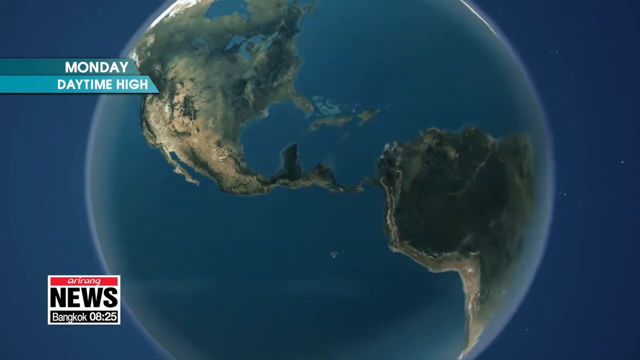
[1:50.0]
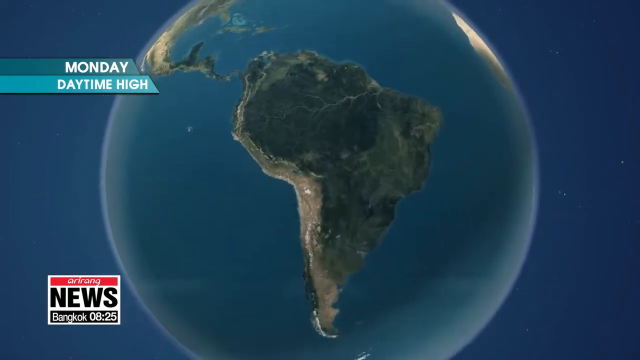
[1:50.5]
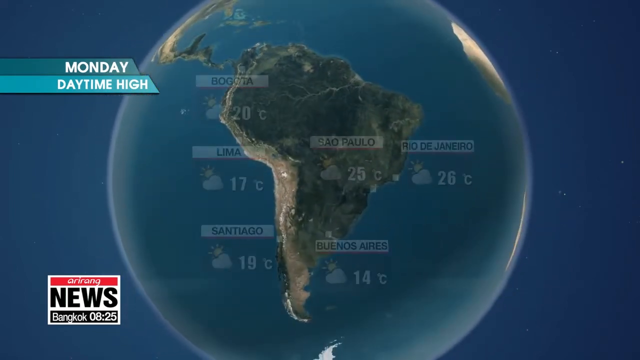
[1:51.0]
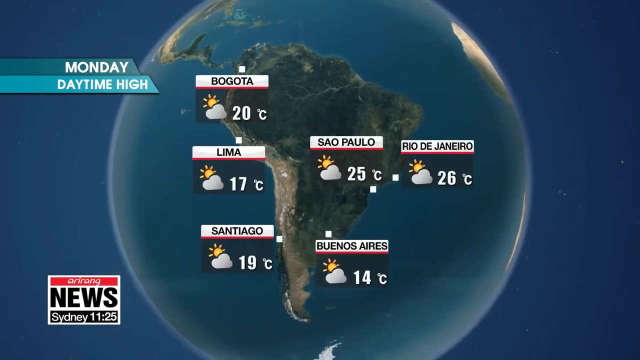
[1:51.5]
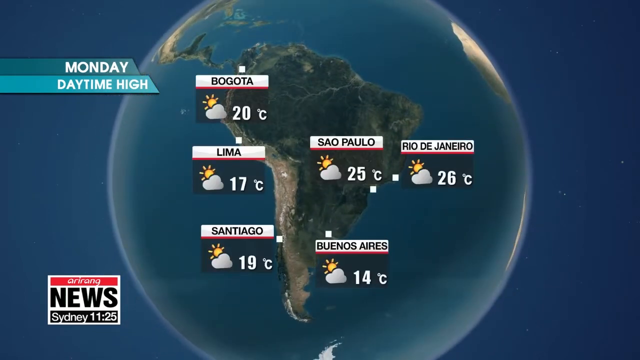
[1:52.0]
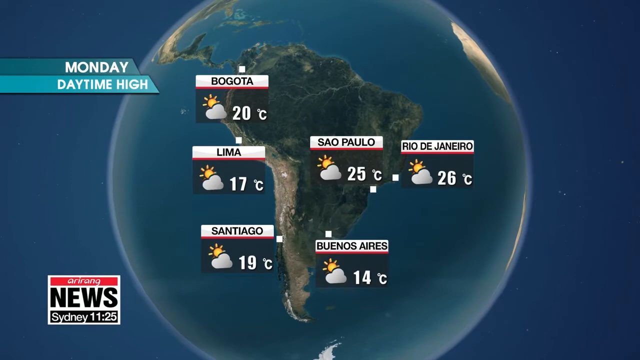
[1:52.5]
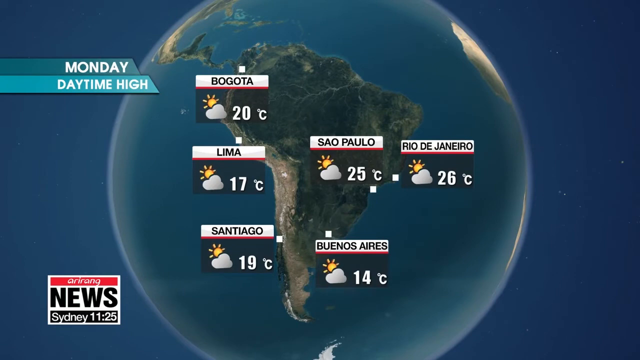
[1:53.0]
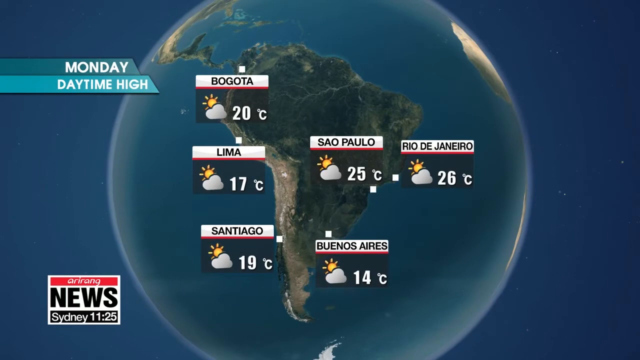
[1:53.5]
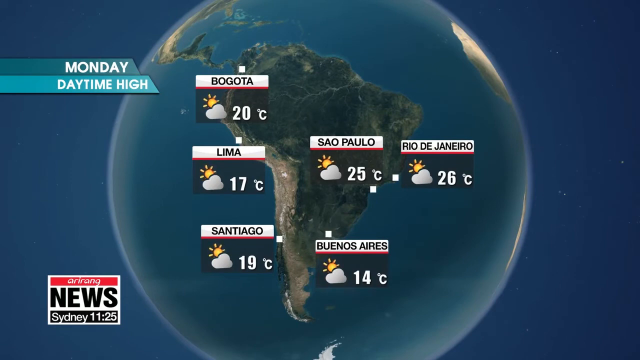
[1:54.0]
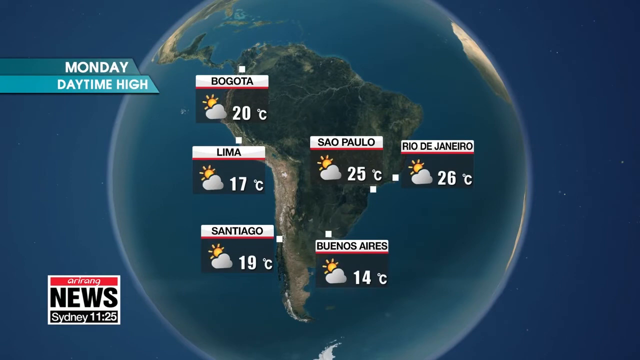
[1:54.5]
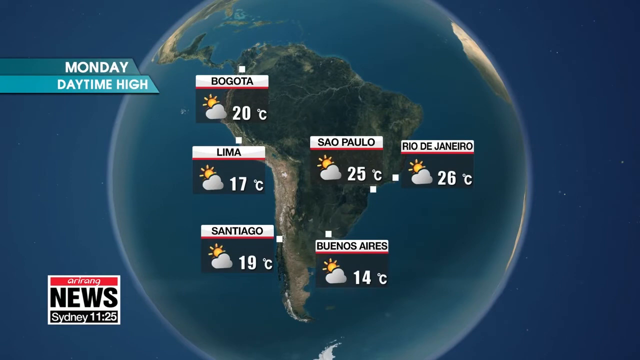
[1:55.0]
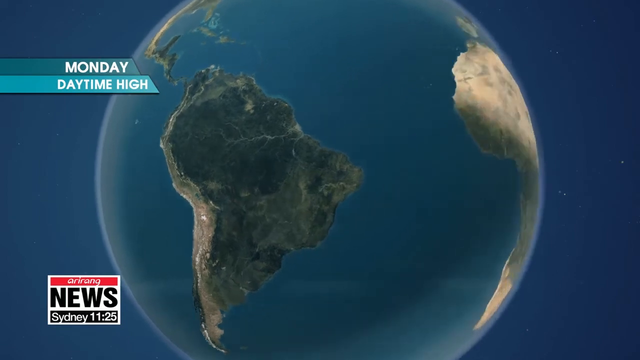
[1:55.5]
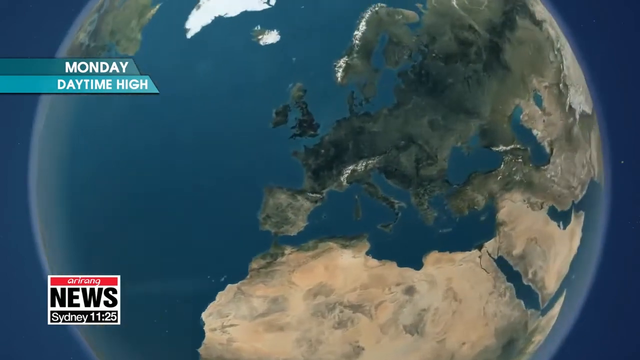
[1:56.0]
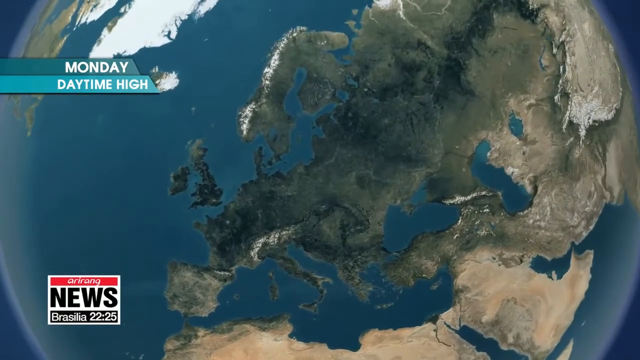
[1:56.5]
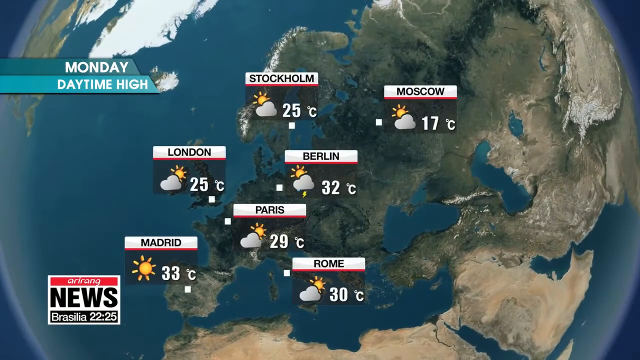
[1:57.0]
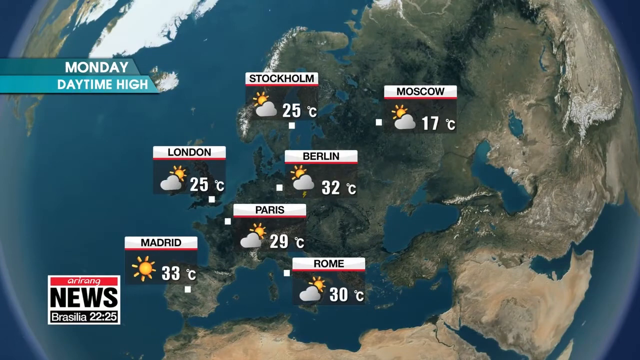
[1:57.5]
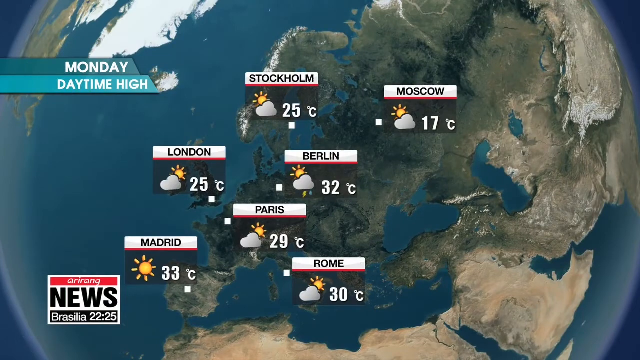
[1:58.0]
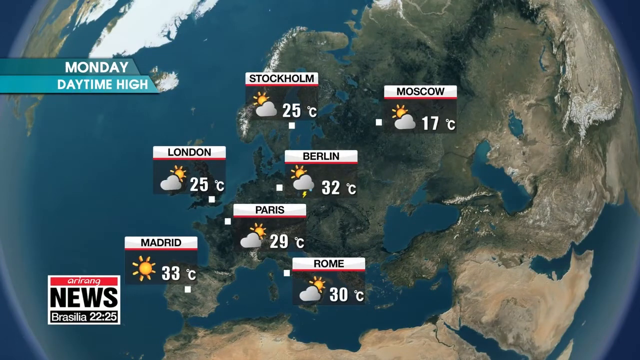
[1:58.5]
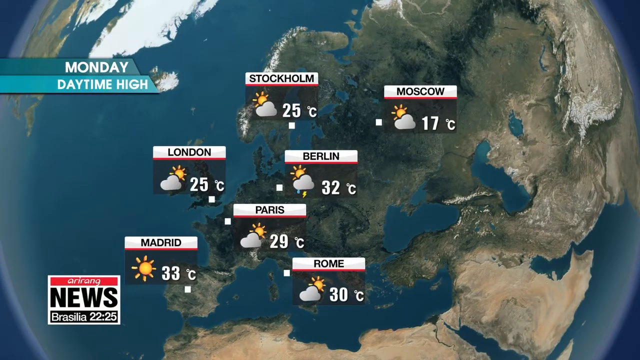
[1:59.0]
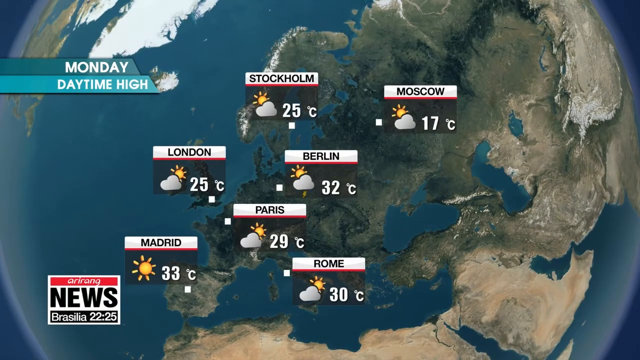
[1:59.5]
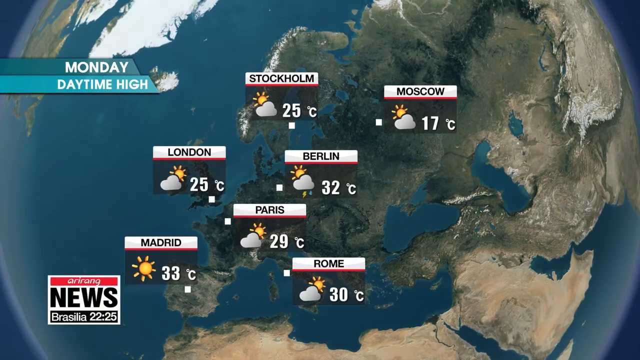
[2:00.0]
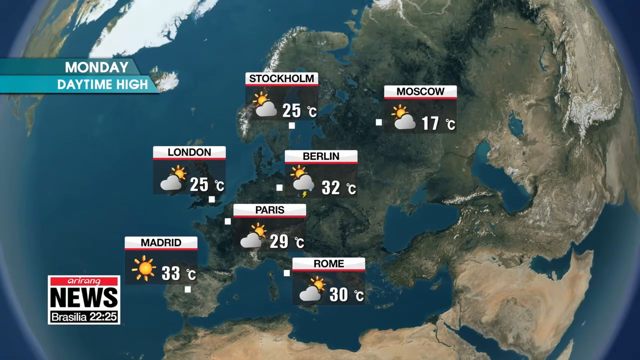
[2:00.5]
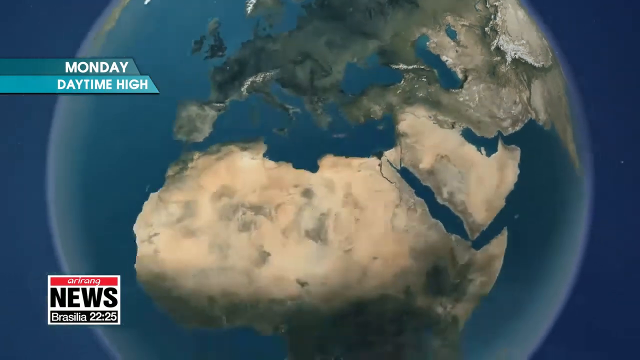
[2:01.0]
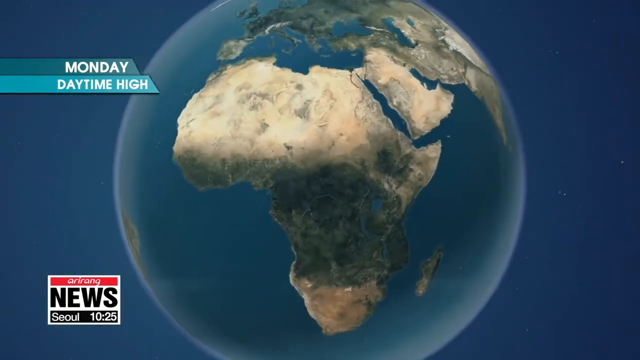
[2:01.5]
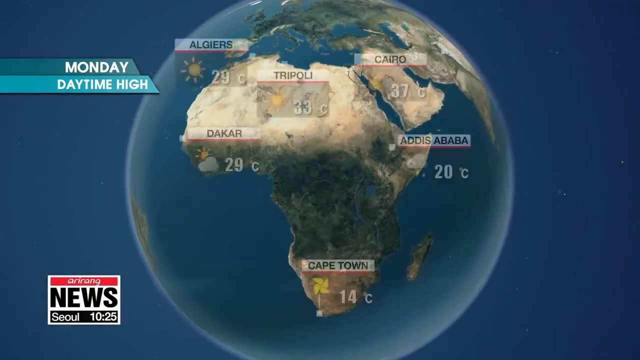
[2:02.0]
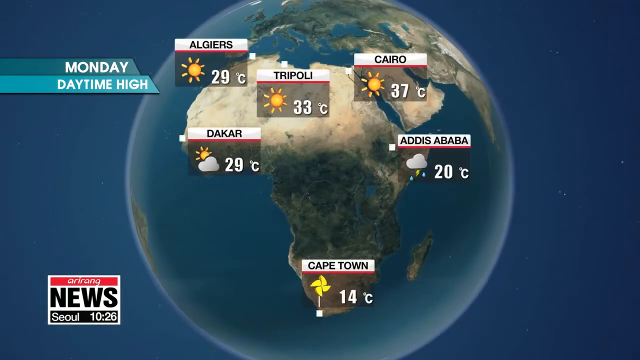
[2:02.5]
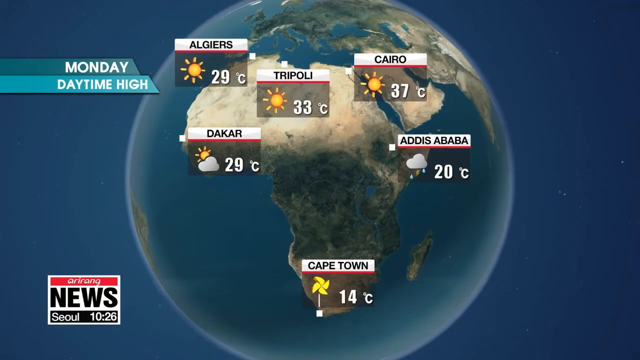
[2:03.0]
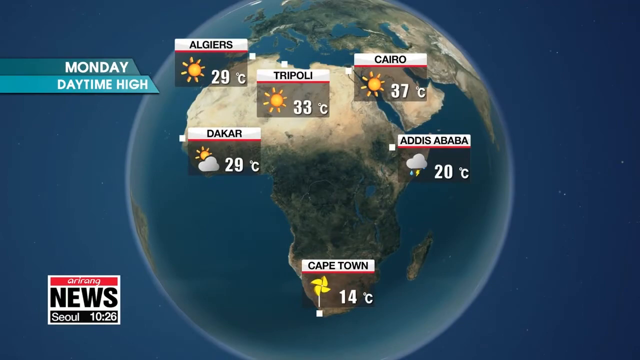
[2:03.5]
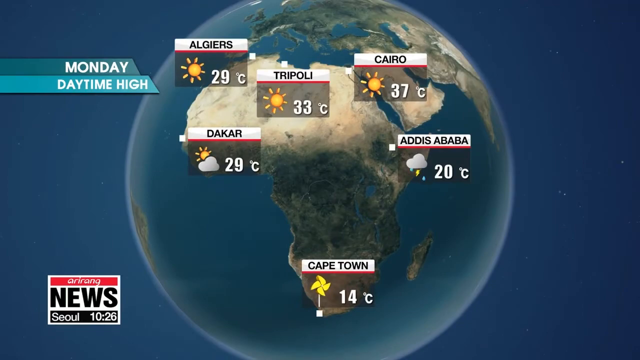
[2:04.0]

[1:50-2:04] A representation of the globe shows the continent of South America with different temperatures for each city: Bogota, at the top of the continent, is expected to reach 20 degrees, Sao Paulo 25 degrees Celsius, Santiago 19 degrees Celsius, and Lima 17 degrees Celsius, along with other cities and their expected temperatures. The view switches to Europe, showing Madrid and expected temperatures of 25 in London, 29 degrees Celsius in Paris, 32 degrees Celsius in Berlin, 17 degrees Celsius in Moscow, and 25 degrees Celsius in Stockholm; these are Monday daytime high temperatures. It then moves to Africa, showing expected temperatures for cities: Cape Town at 14 degrees Celsius, Addis Ababa at 20 degrees Celsius, and Kario at 37 degrees Celsius.